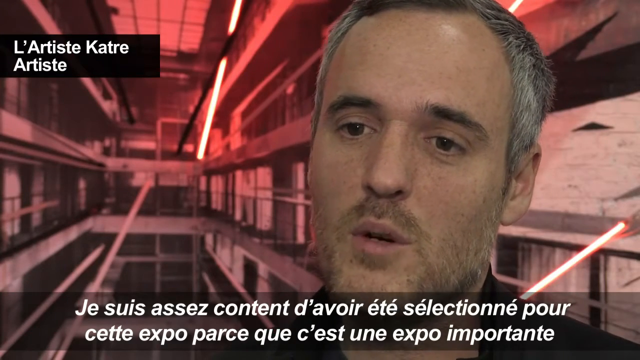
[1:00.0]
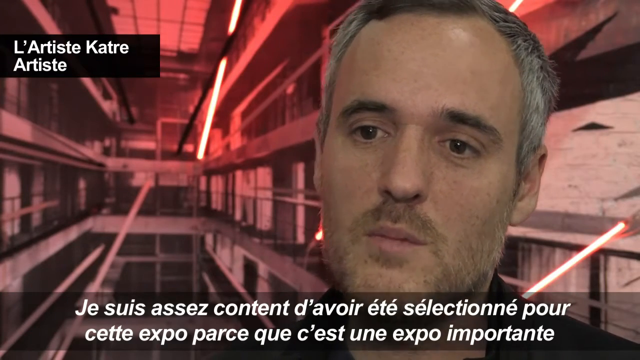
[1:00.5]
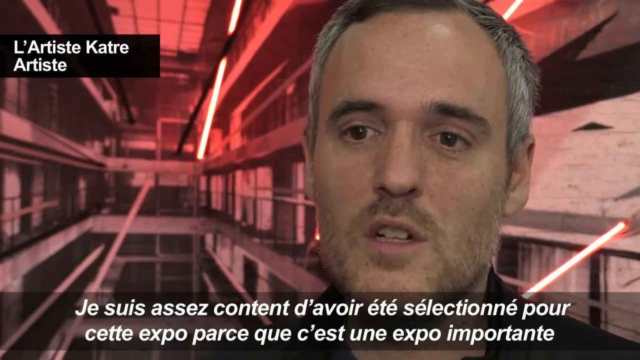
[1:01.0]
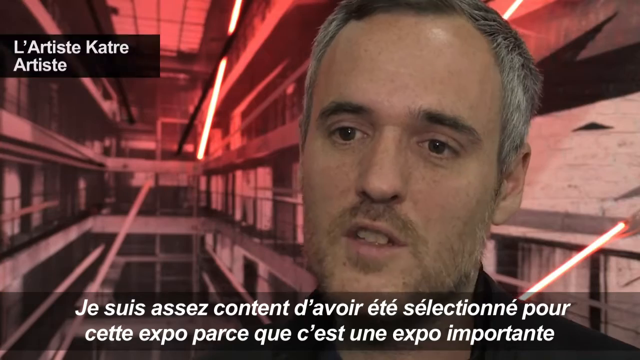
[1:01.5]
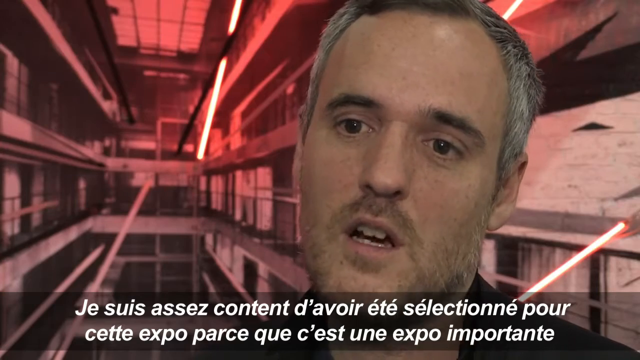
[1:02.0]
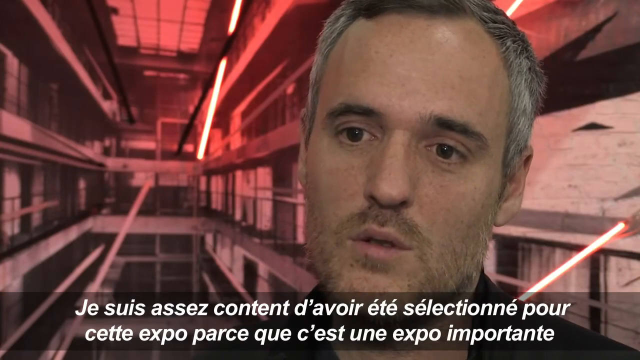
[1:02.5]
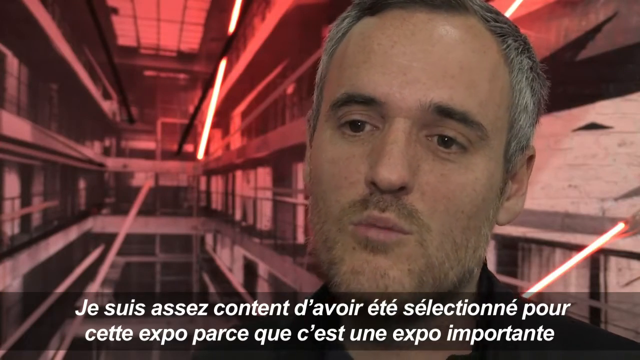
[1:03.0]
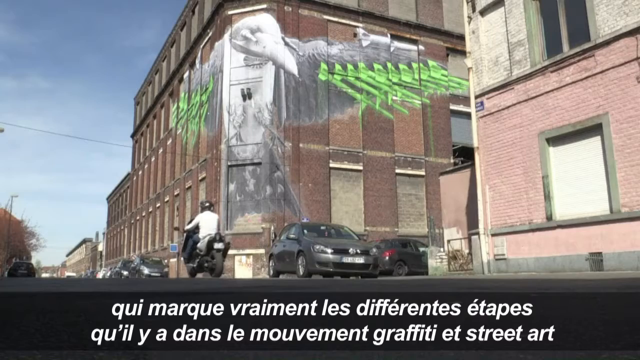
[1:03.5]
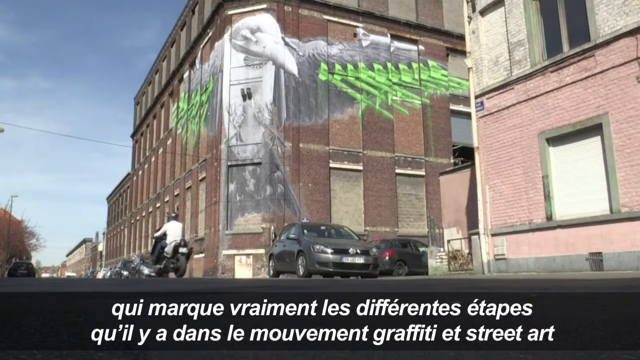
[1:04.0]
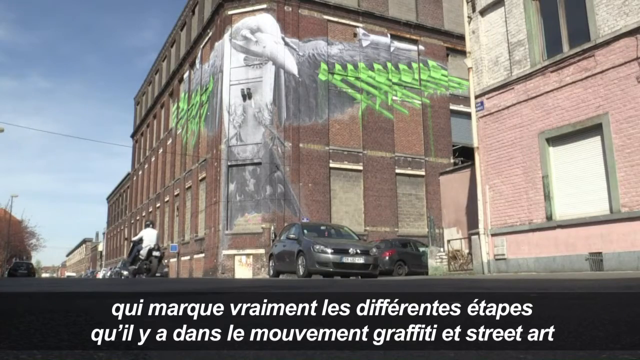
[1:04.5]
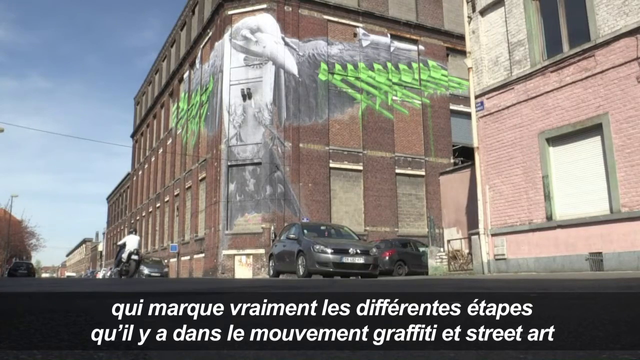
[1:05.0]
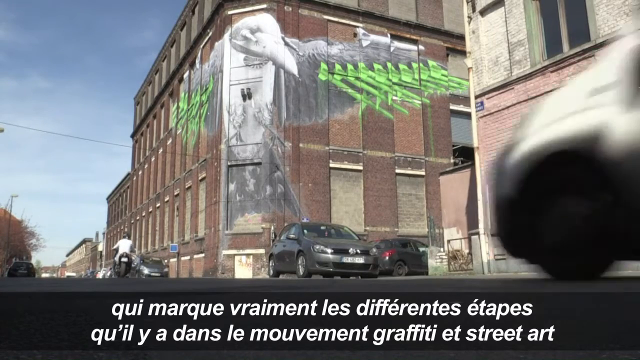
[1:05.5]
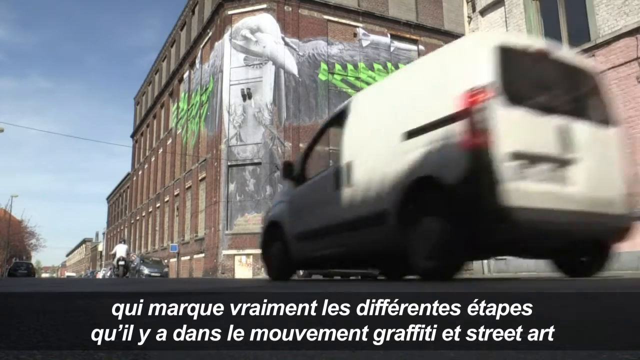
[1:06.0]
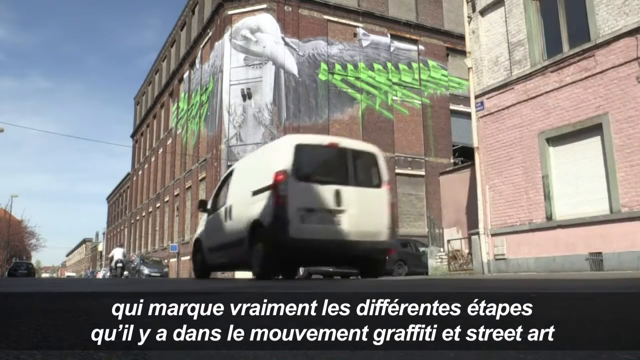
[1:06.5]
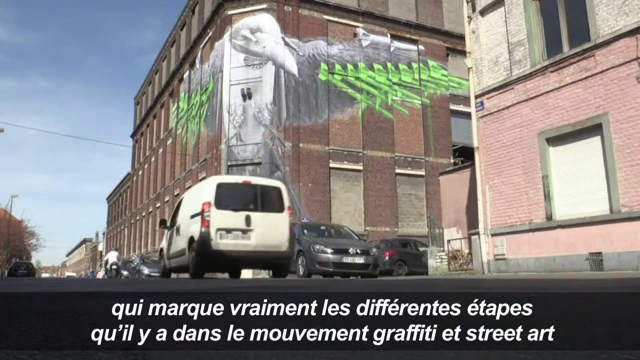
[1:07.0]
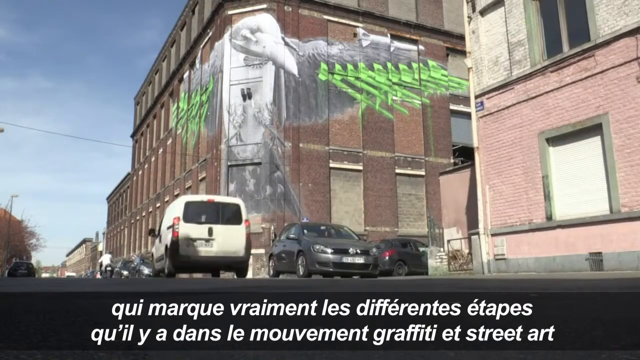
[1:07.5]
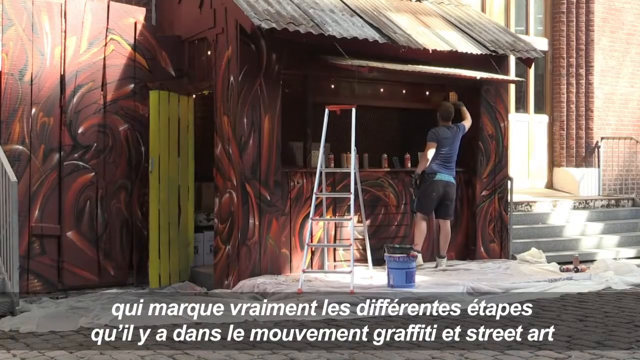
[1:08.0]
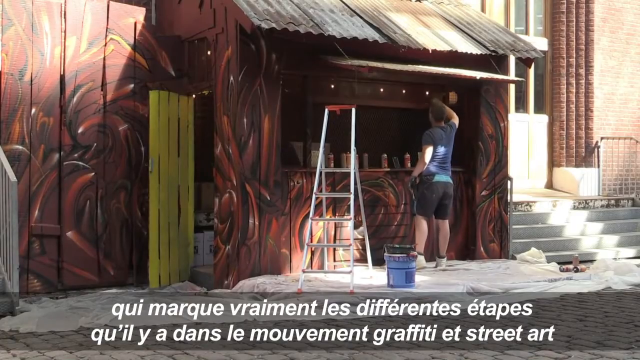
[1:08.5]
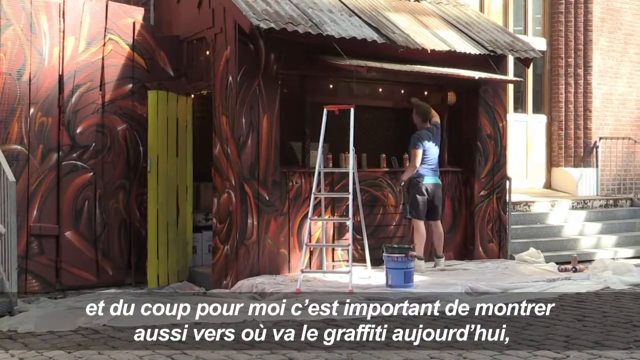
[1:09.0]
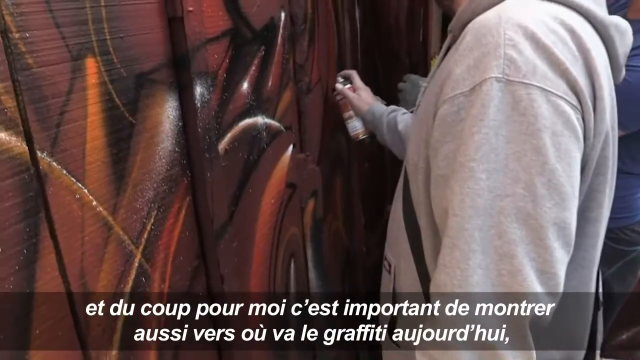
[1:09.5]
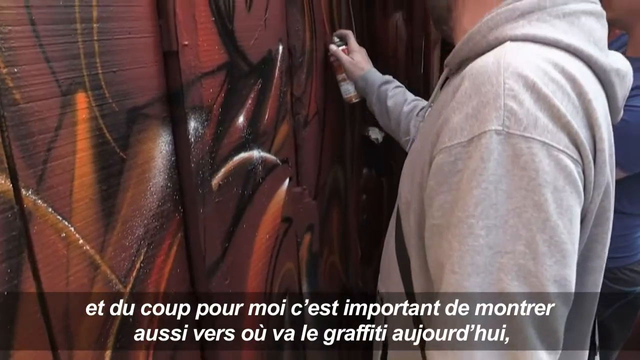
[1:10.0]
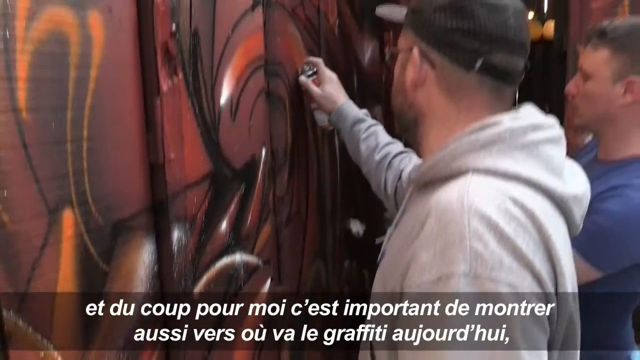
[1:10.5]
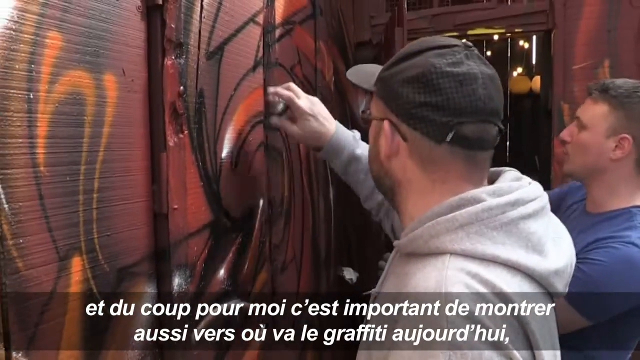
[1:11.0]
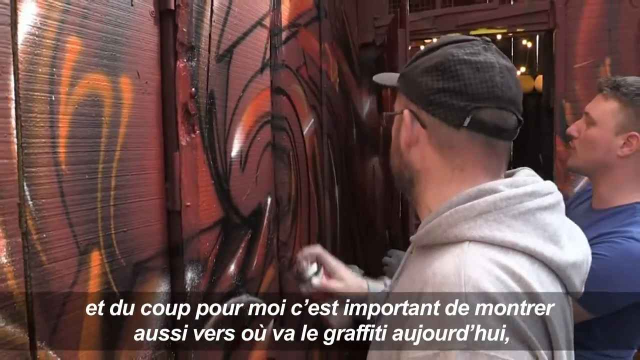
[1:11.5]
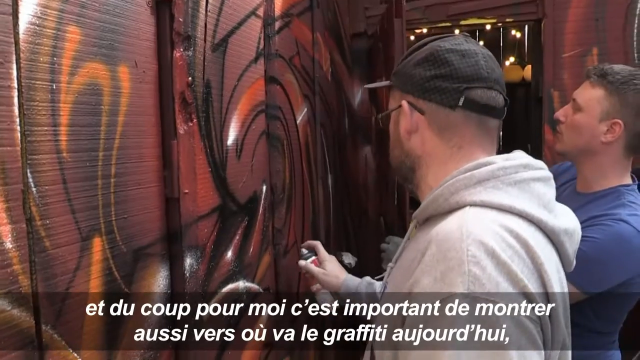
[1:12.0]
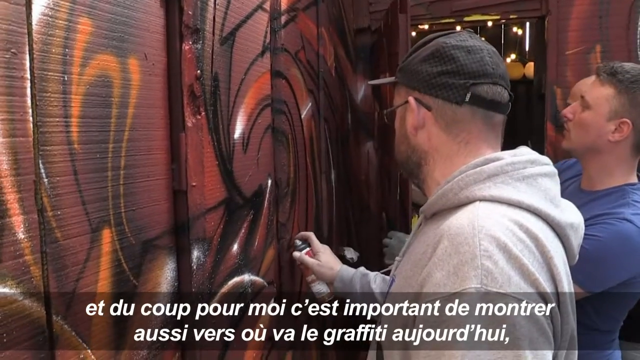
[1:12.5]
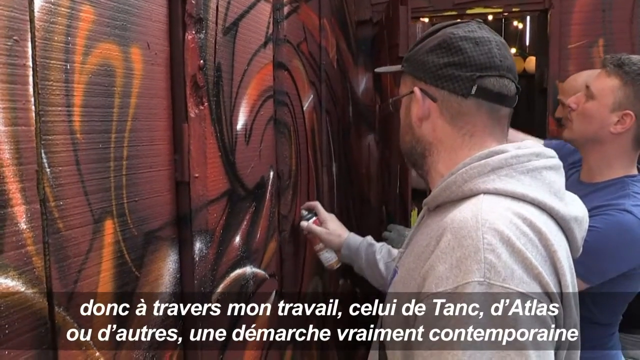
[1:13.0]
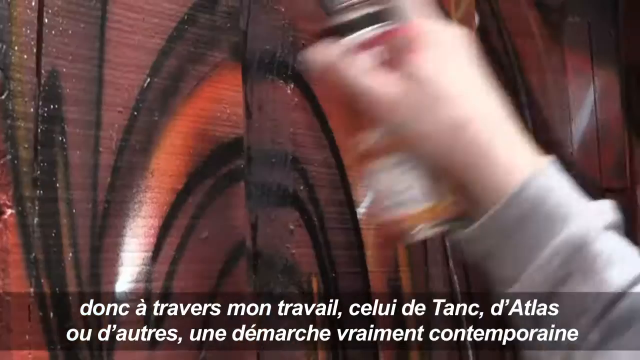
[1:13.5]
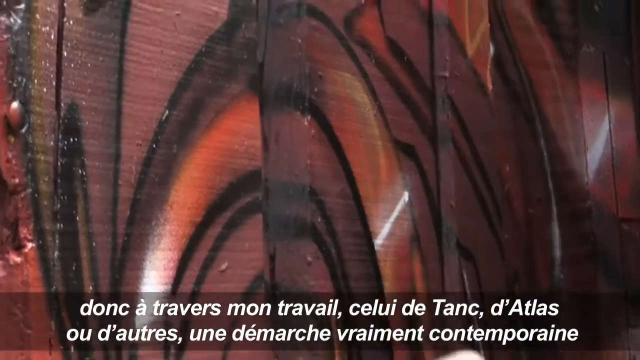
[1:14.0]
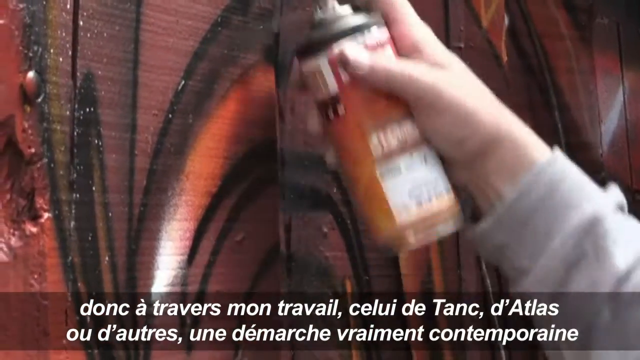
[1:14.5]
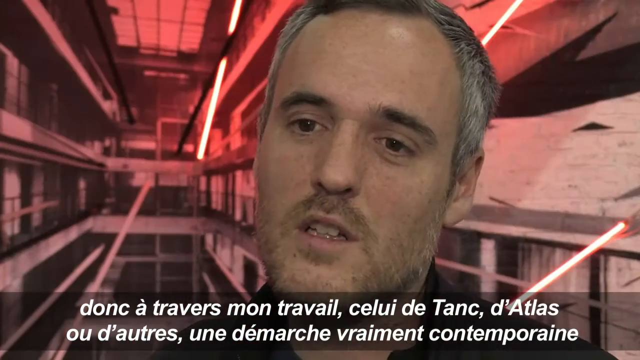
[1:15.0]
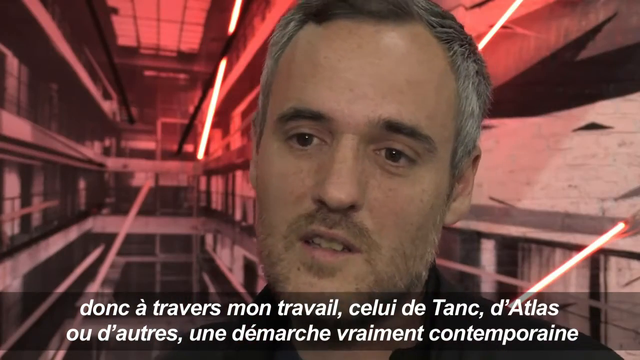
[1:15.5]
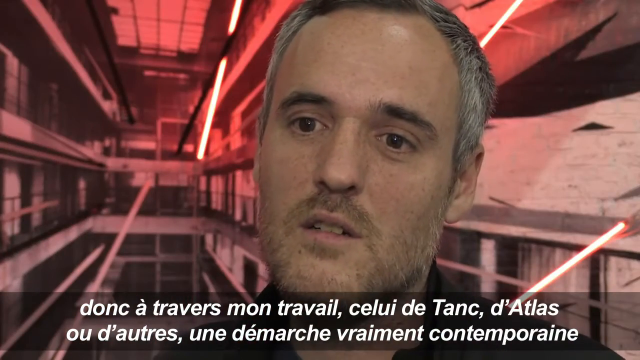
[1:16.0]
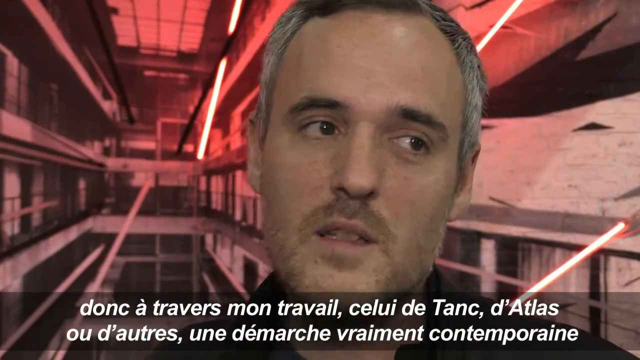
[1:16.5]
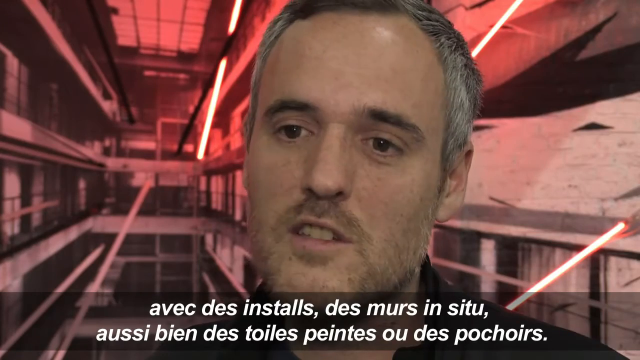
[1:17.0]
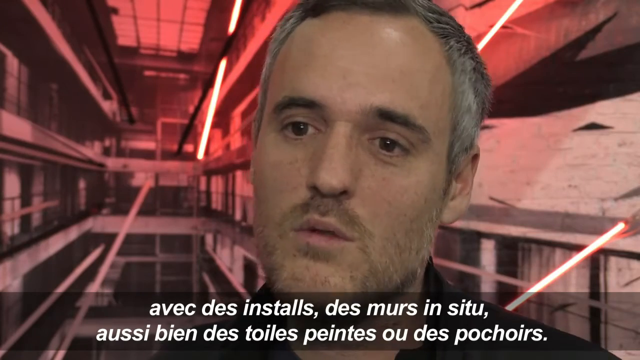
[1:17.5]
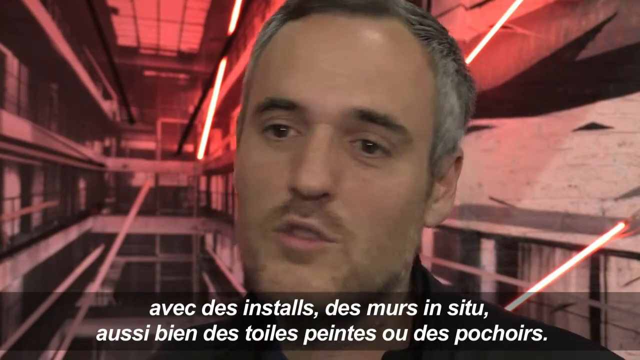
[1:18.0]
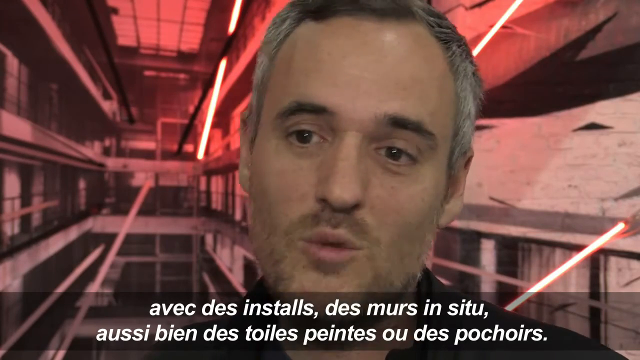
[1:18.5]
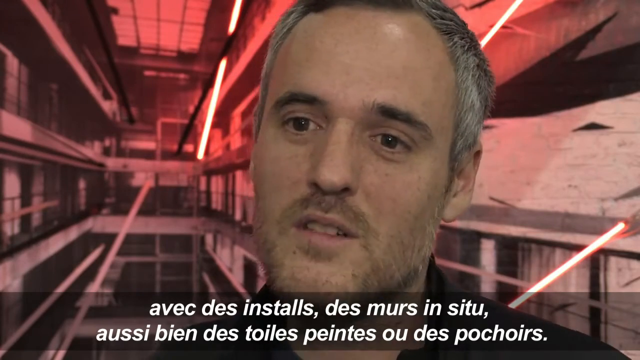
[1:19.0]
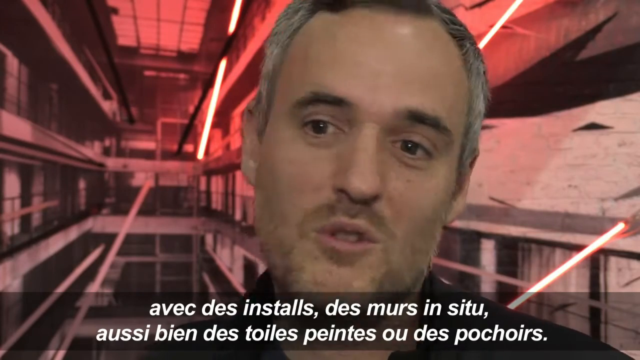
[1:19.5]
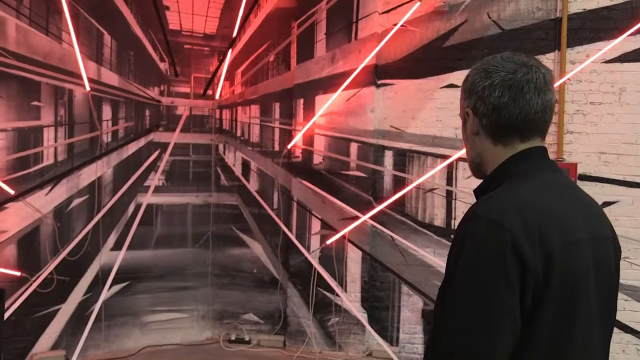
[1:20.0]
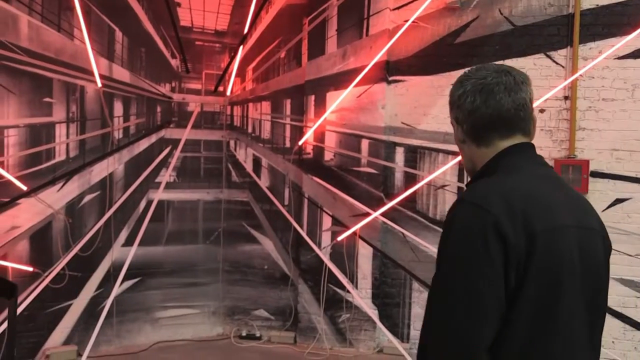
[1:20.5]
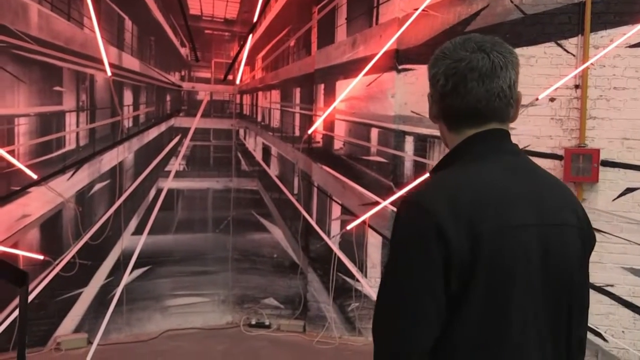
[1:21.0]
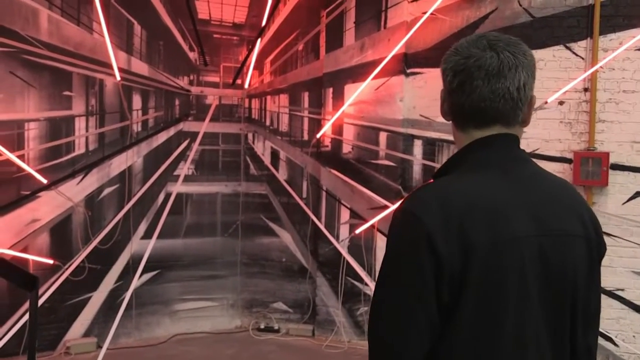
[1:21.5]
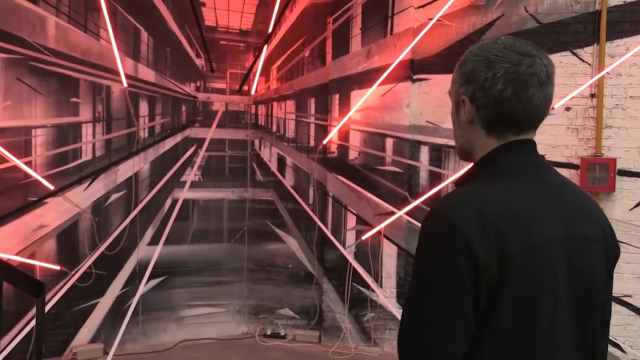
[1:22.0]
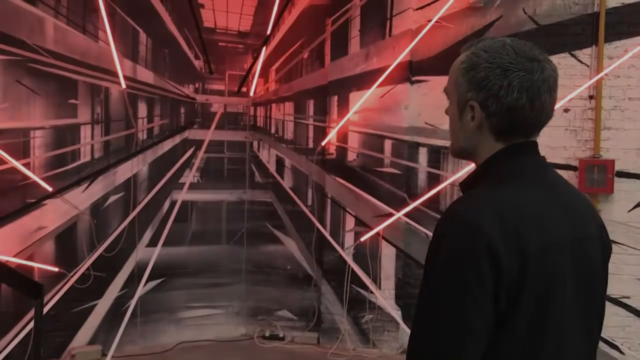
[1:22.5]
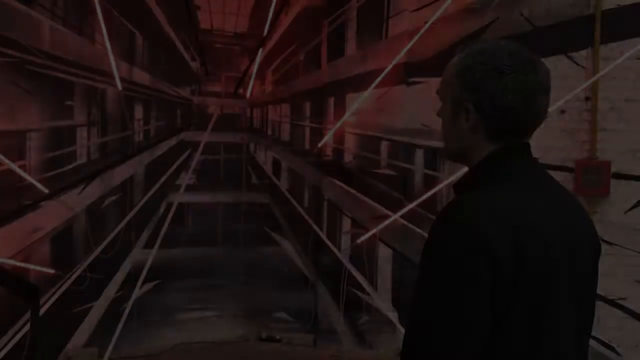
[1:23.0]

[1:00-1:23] The camera focuses on the same man who was taking photographs of the graffiti inside the building, who appears to be giving his view on art or graffiti. The scene then changes to the streets outside, with huge old buildings. Someone rides past on a motorbike and a car drives past. There is a huge graffiti design of an eagle on a building, and another car drives past. The scene changes again to a house made of wood; it seems the whole house is being graffiti painted, and two guys are spray-painting it in orange, black, brown and red. The camera is on the photographer once again. Then the setting is a building that looks very dull, with random lights shooting out like lasers. A man is standing there.